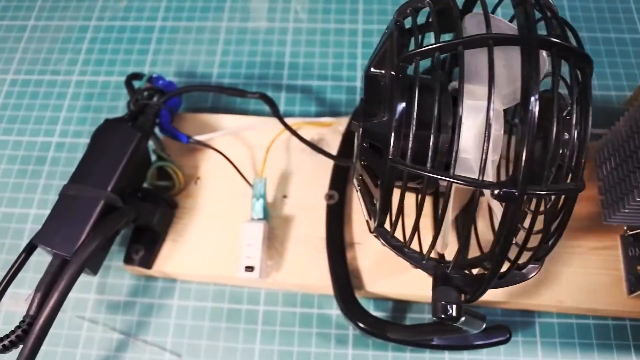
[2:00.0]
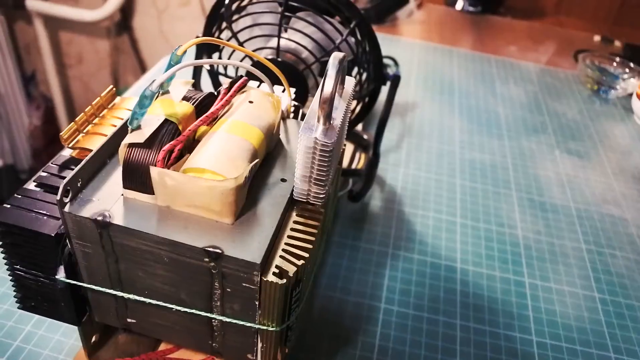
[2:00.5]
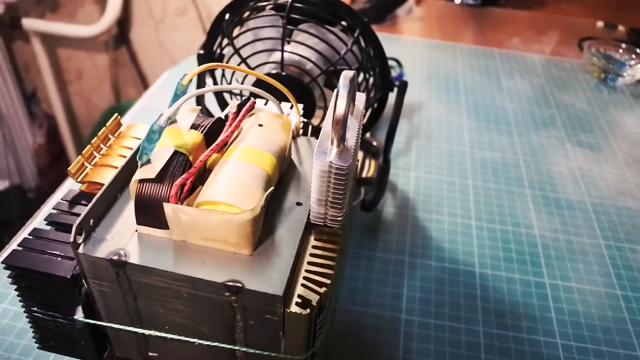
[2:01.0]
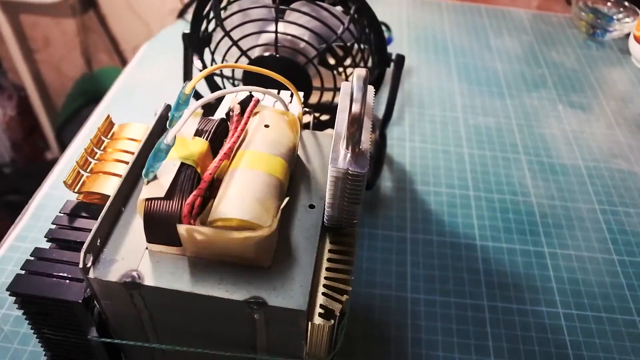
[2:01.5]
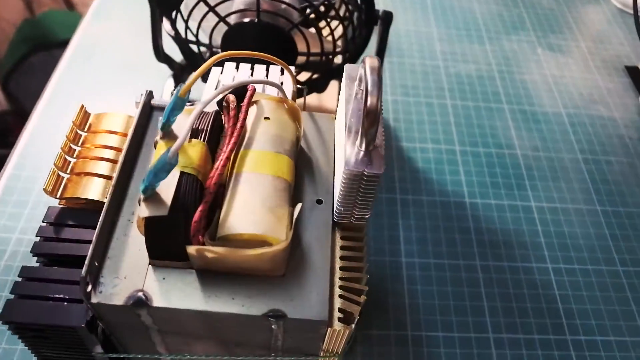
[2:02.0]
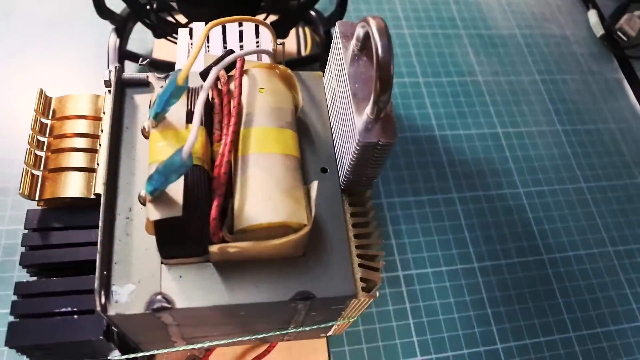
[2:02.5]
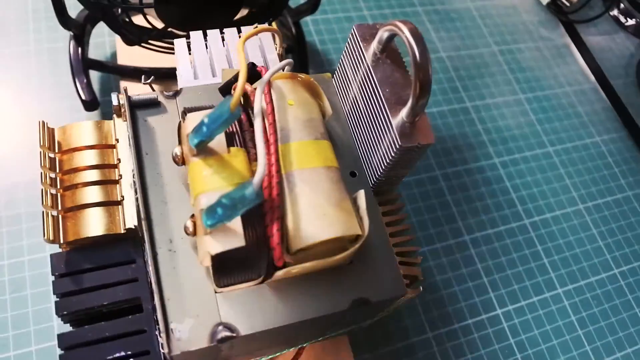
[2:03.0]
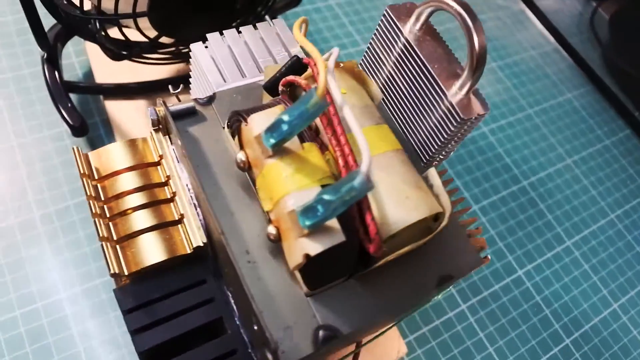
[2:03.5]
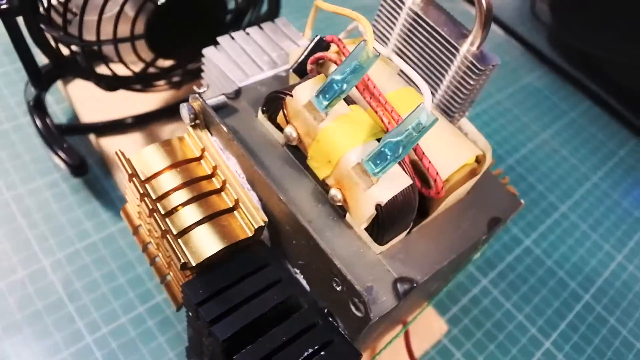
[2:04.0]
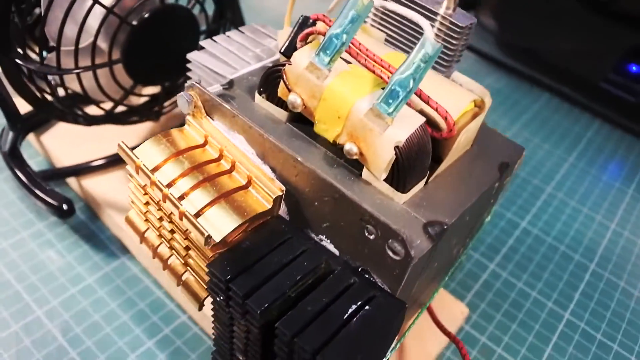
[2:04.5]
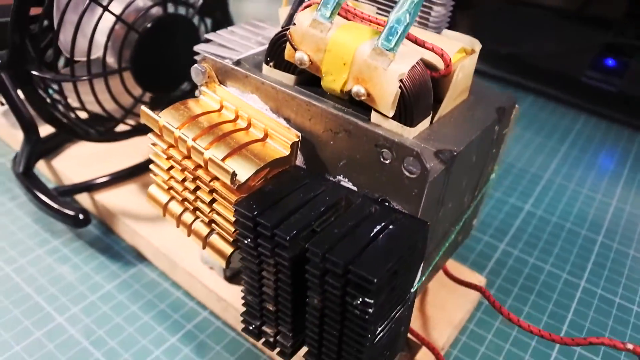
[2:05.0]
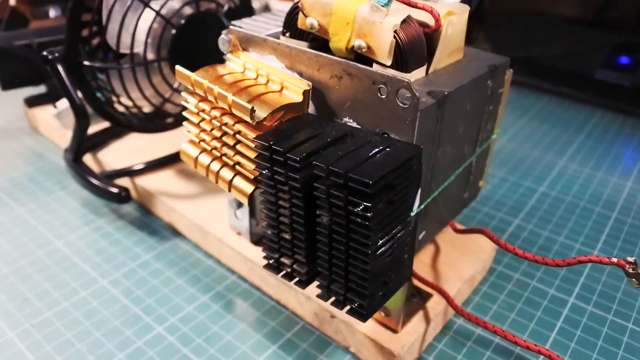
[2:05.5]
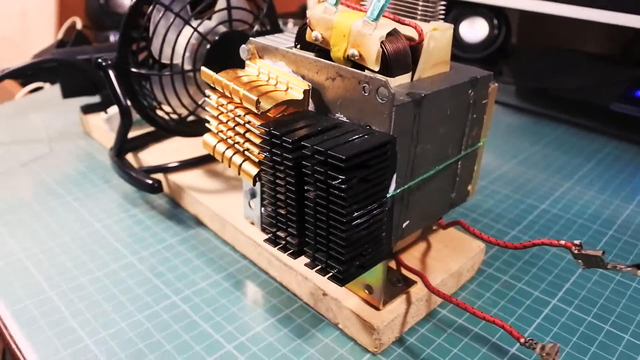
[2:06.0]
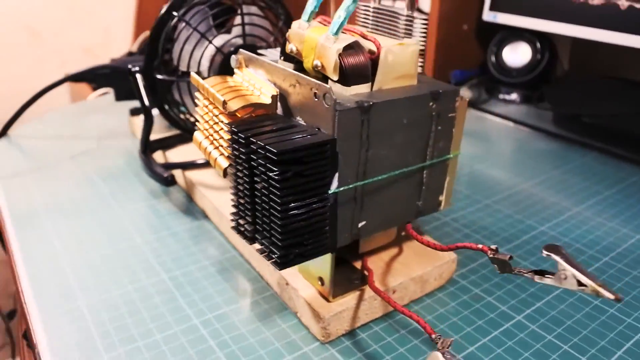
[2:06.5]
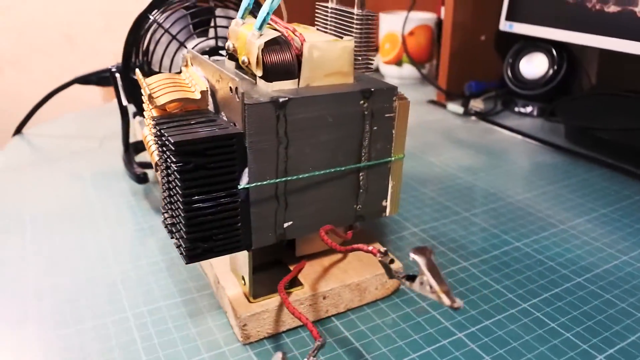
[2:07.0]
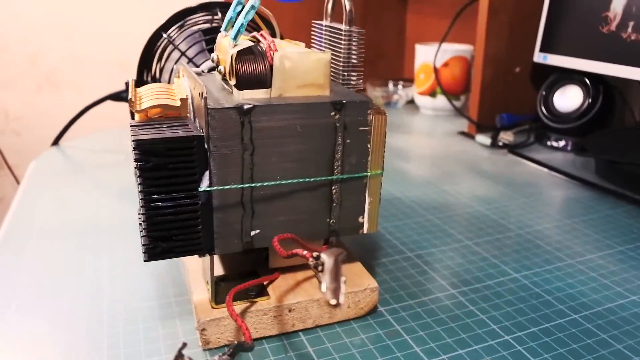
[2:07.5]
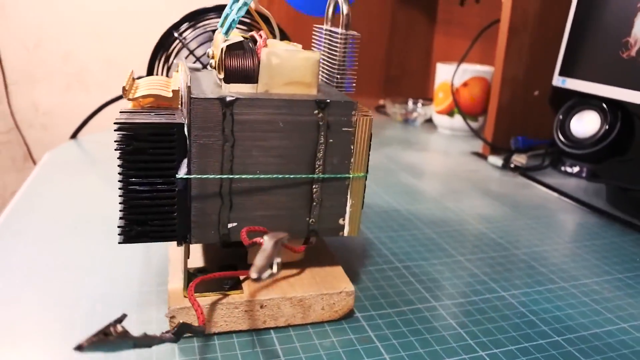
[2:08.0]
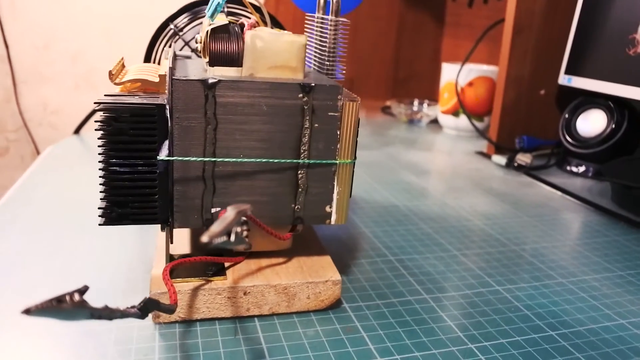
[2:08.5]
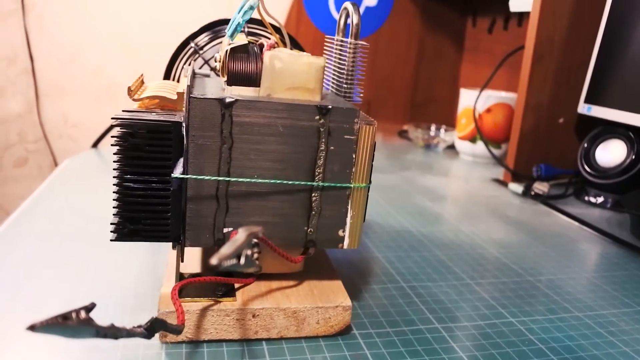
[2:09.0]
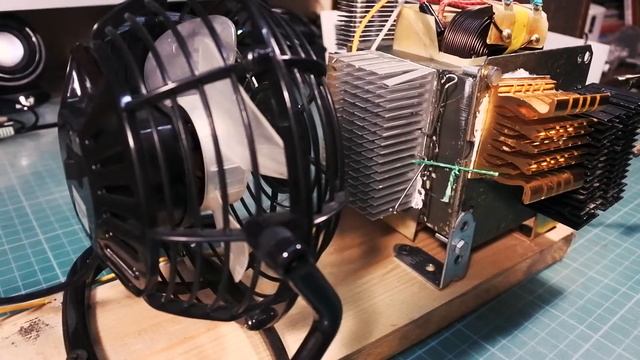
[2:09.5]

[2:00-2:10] A new setup appears, made of what may be materials taken from the microwave: cables with things that look like hemostats and a fan, all on a board. It is unclear whether it will be put back into the microwave or whether the parts were taken from the broken microwave to be repurposed into something else.